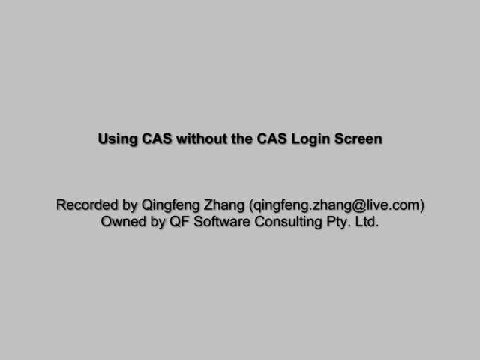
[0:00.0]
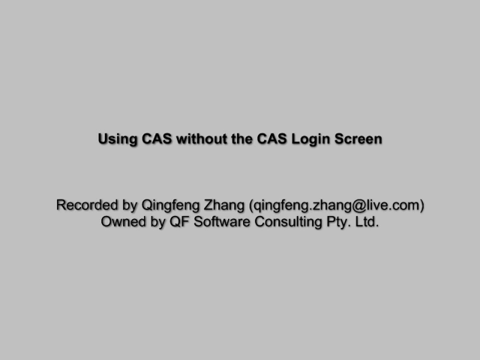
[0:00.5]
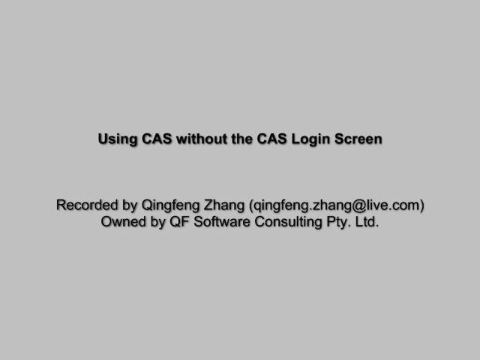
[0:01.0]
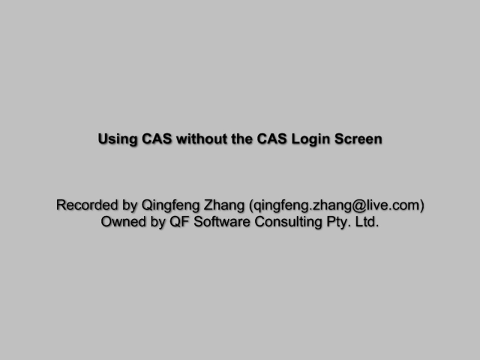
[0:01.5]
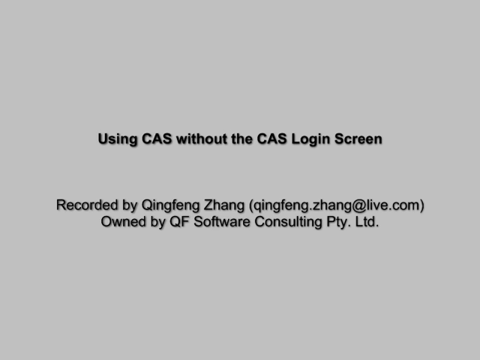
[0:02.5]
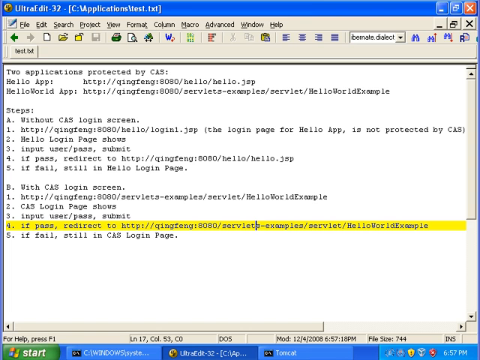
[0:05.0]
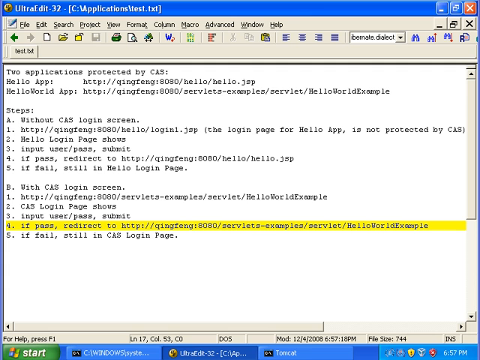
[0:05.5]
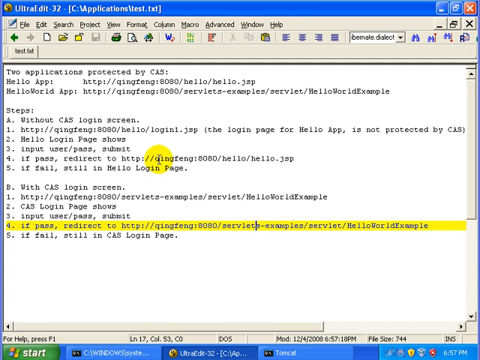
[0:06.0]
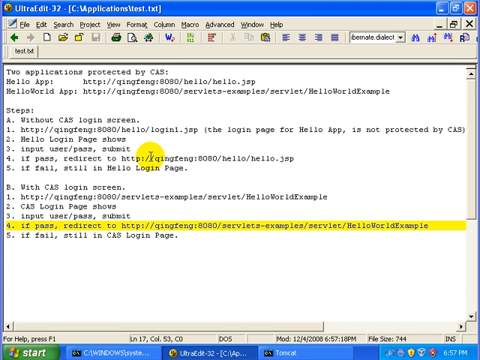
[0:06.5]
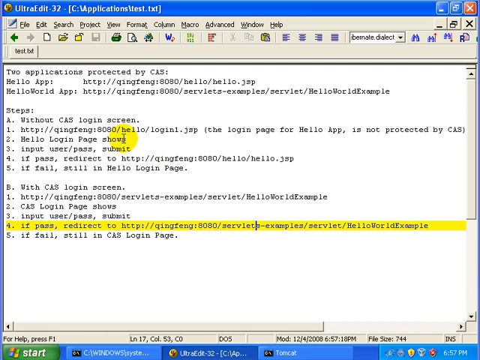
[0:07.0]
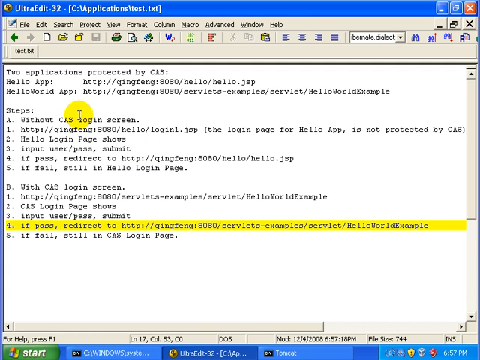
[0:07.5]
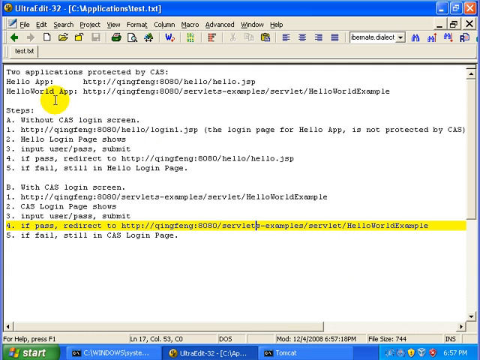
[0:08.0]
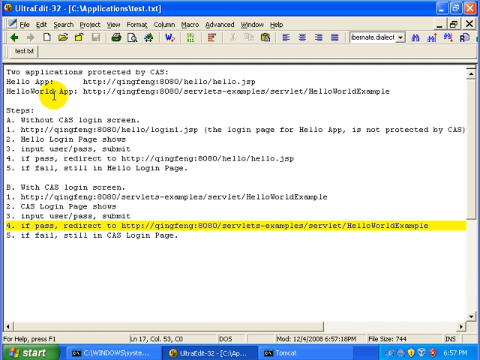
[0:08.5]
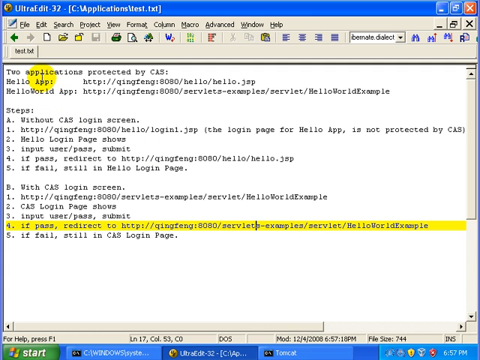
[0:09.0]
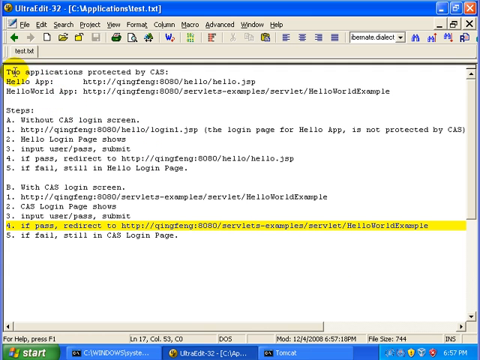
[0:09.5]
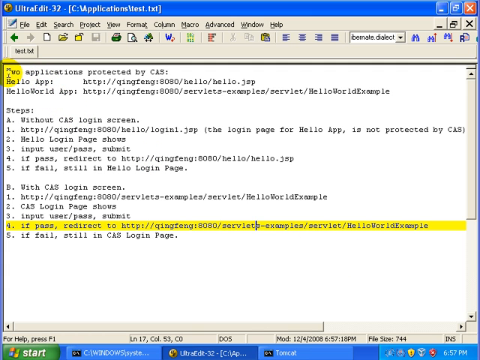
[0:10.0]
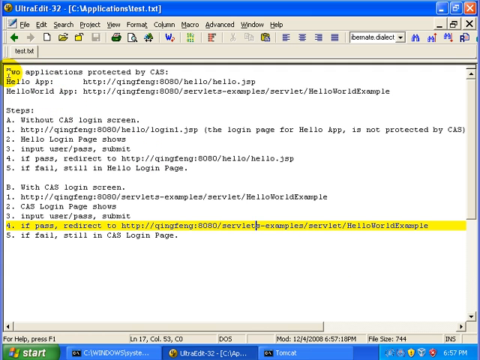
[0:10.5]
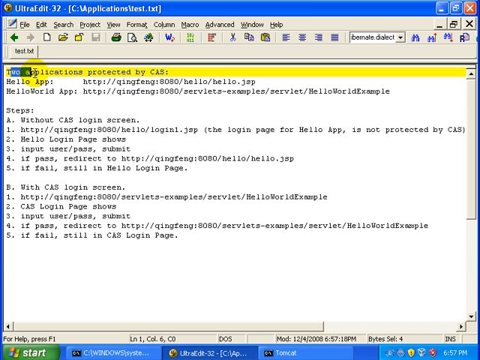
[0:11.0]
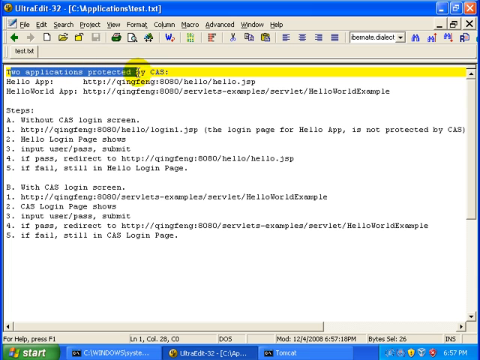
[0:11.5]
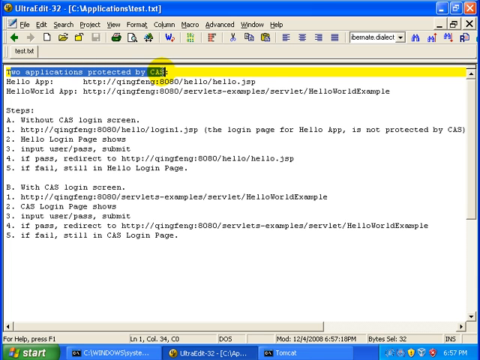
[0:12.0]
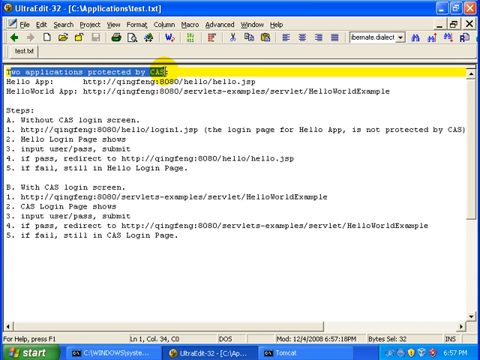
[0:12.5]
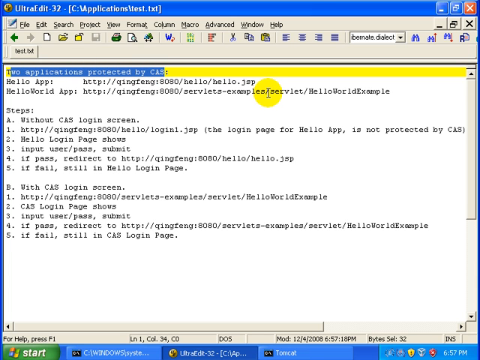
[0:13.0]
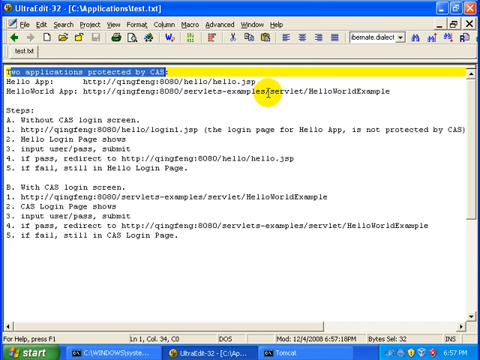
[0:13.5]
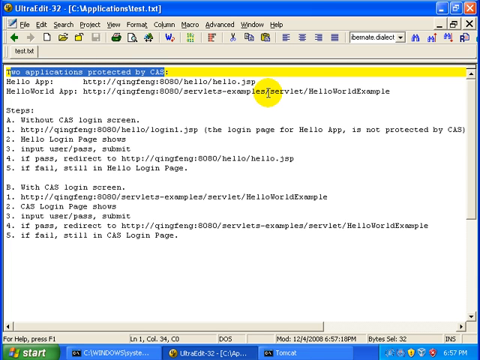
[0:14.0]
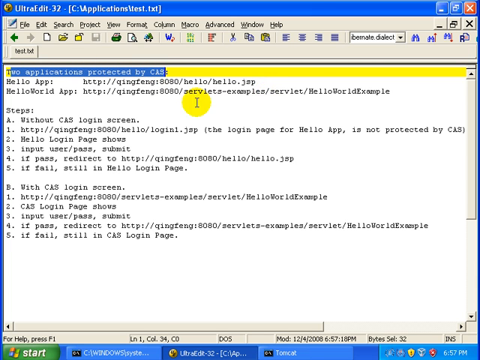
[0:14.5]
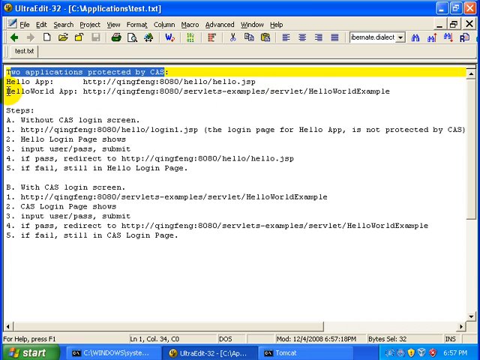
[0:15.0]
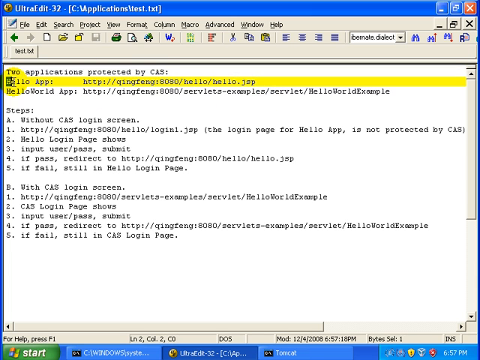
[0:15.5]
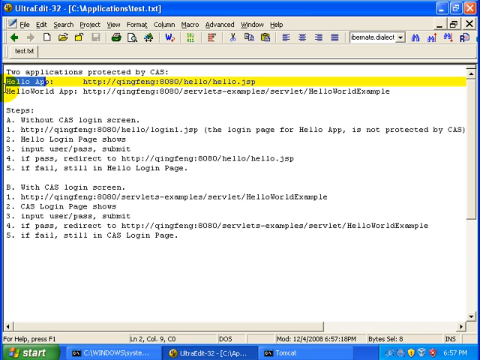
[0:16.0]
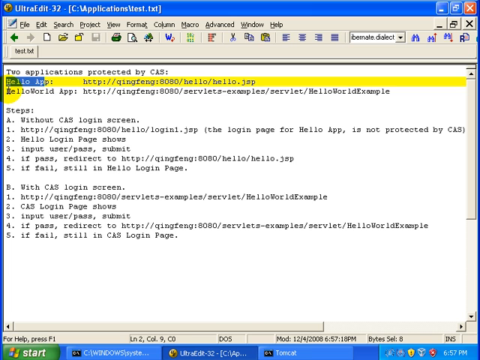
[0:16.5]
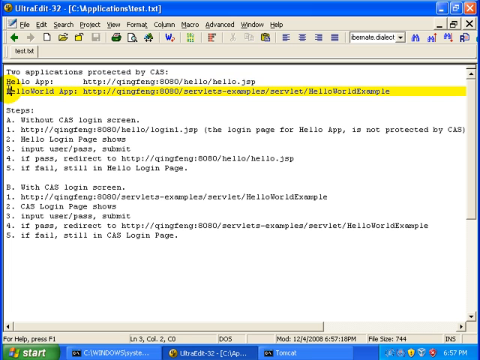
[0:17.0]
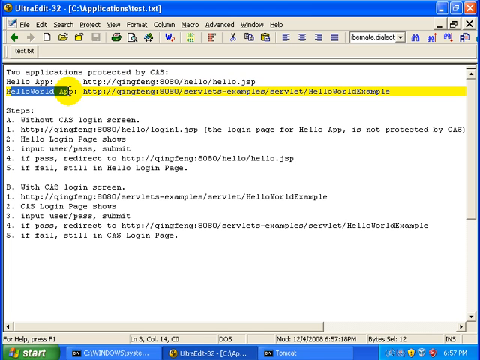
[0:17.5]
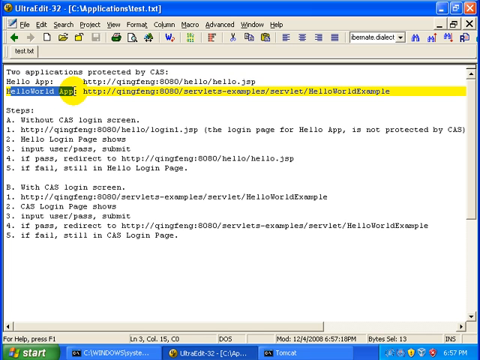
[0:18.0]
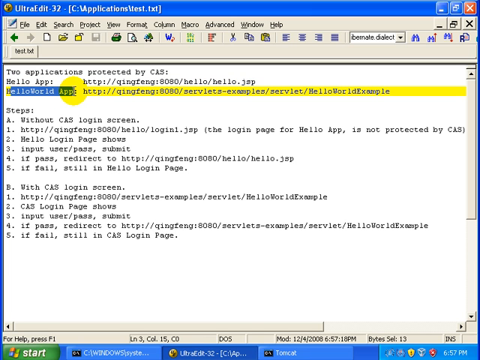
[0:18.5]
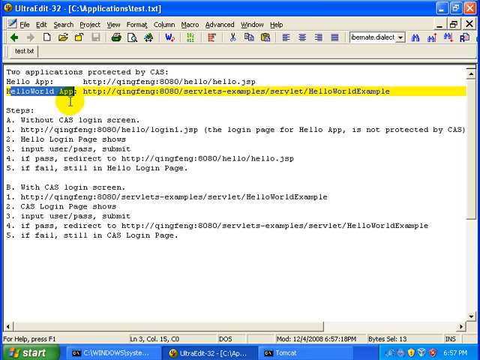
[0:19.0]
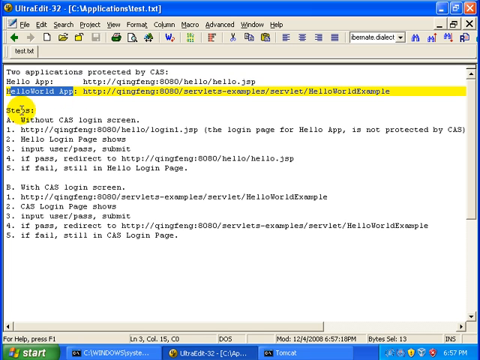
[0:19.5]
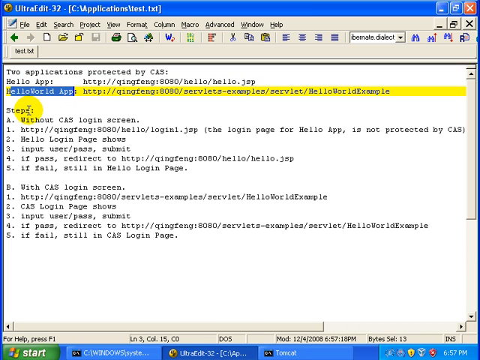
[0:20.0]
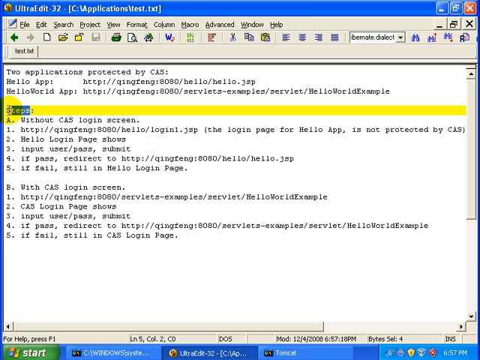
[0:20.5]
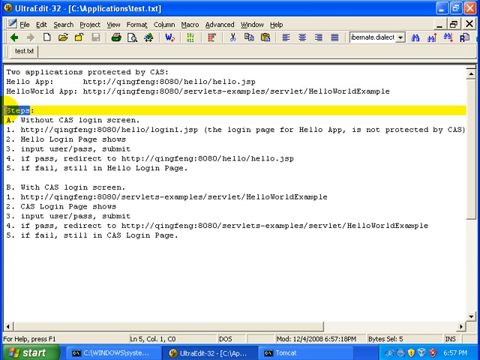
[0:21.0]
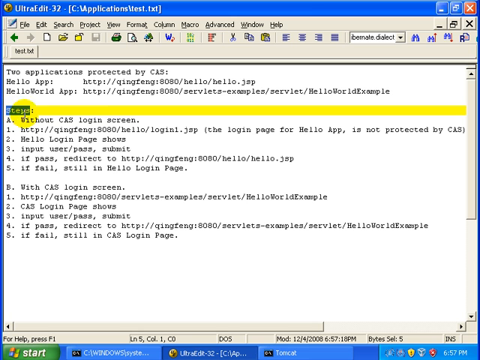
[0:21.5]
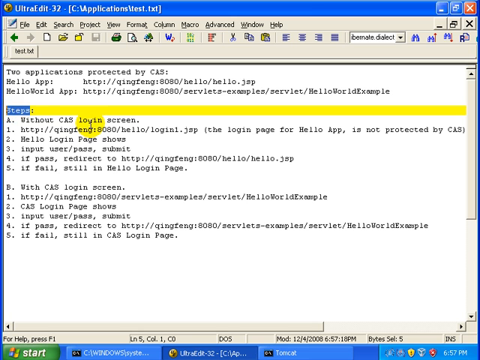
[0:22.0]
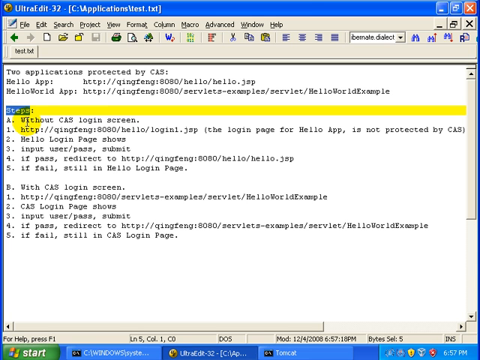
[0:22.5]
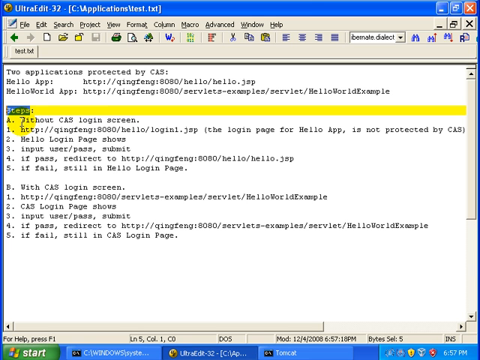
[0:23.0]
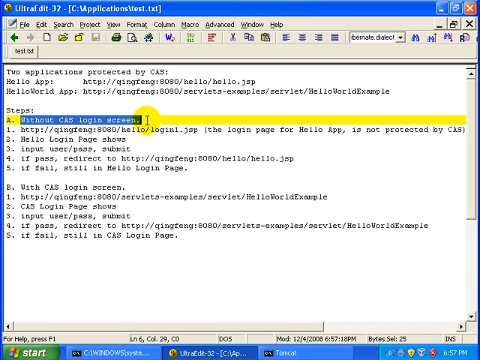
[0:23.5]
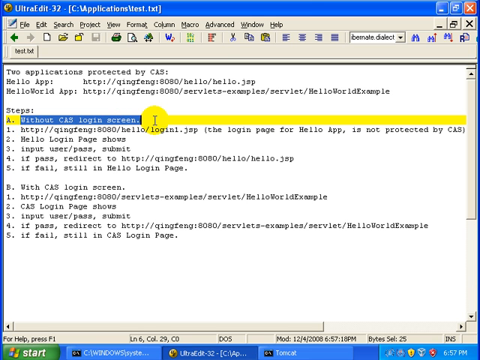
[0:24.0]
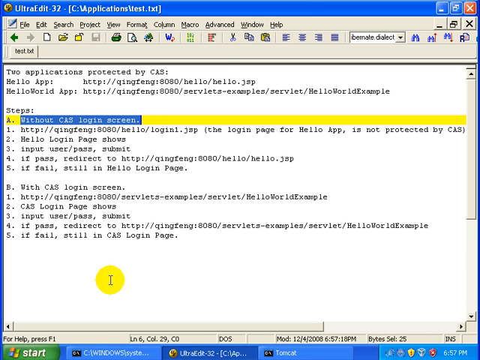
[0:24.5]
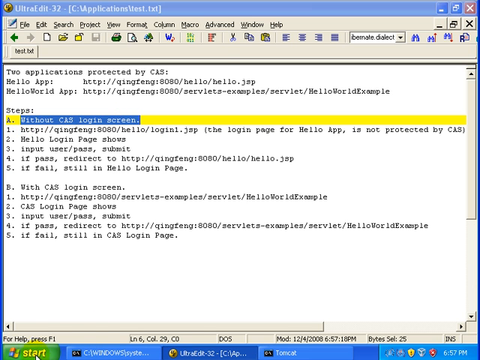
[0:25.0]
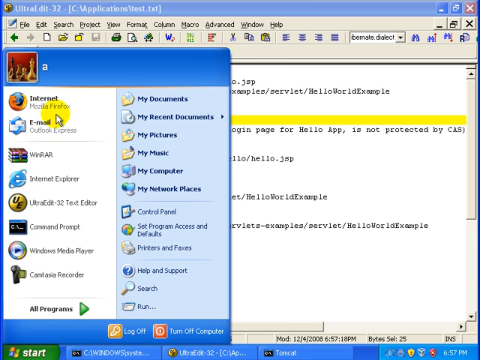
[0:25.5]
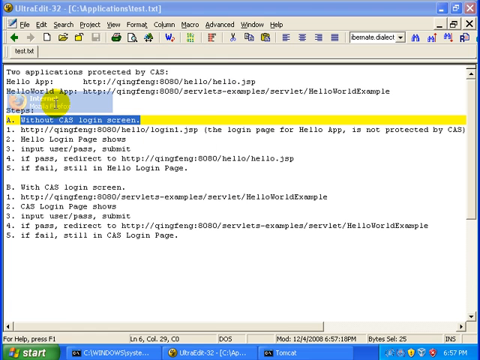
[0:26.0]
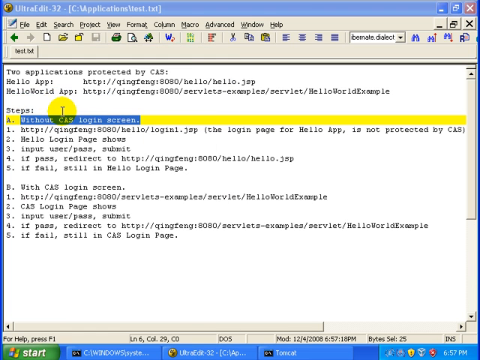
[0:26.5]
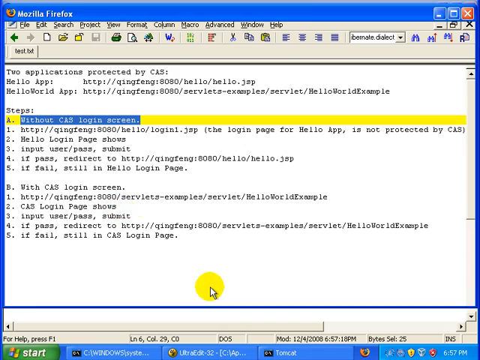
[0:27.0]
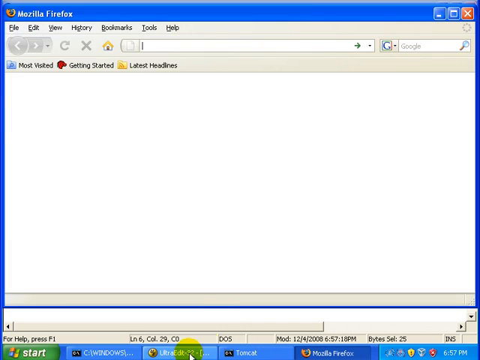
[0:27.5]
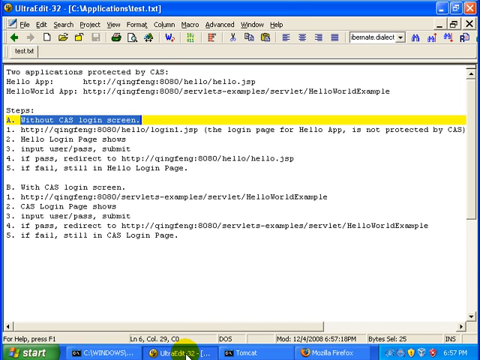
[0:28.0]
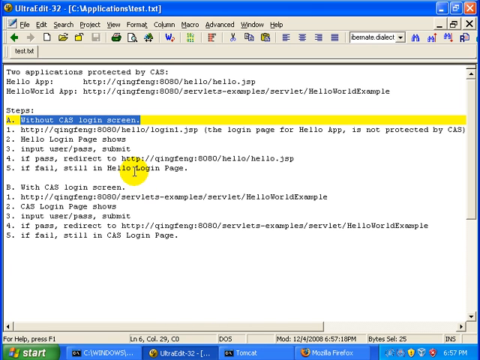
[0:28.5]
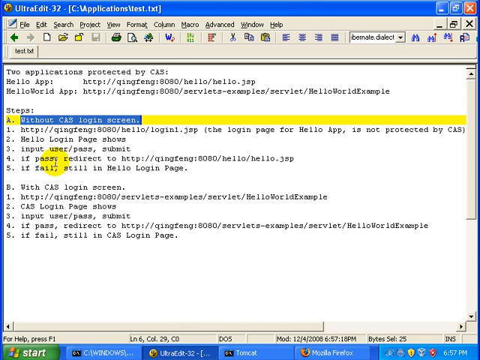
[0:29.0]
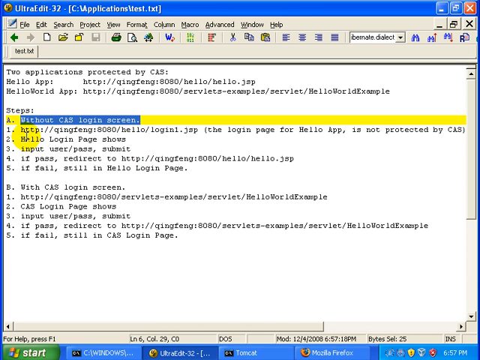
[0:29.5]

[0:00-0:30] A title screen reads in black letters at the center "using CAS without the CAS login screen." Beneath that it reads "recorded by Qingfeng Zhang (Qingfeng.Zhang@live.com)" and then "owned by QF Software Consulting PTY.LTD." The video then moves to an old Microsoft Windows XP screen with what looks to be a program called UltraEdit-32; the title bar at the top reads "UltraEdit-32" followed in brackets by "C:/applications/test.txt." Below it is the menu bar: File, Edit, Search, Project, View, Format, Column, Macro, Advanced, Window, Help, along with the minimize and X window buttons. The text area reads "two applications protected by CAS," followed by a hello app link to Qingfeng Zhang on port 8080 ending in "hello.jsp" and a hello world app link to Qingfeng on port 8080 for the servlets example hello world example. Below are steps A and B, each numbered one through five. A is "without CAS login screen": 1 is the hello app link, followed in parentheses by "the login page for hello app is not protected by CAS"; 2 is "hello login page shows"; 3 is "input user/pass submit"; 4 is "if pass redirect to" the Qingfeng link; and 5 is "if fail, still in hello login page." B is "with CAS login screen": 1 is the servlets example link; 2 is "CAS login page shows"; 3 is "input user/pass submit"; 4 is "if pass redirect to" the servlets example link; and 5 is "if fail, still in the CAS login page." The cursor has a yellow highlight circle on it. B4 is highlighted, then the first line, "two applications protected by CAS," then the second line and the third line, each highlight moving on to the next, and then A1 is highlighted. The Windows start menu is brought up, listing Internet, email, WinRAR, Internet Explorer, UltraEdit, Command Prompt, Windows Media Player, Cantagia Recorder, My Documents, My Recent Documents, My Pictures, My Music, My Computer, My Network Places, Control Panel, Set Program Access and Defaults, Printers and Faxes, Help and Support, Search and Run. Internet is clicked, Mozilla Firefox pops up for a second, and then the UltraEdit window returns.